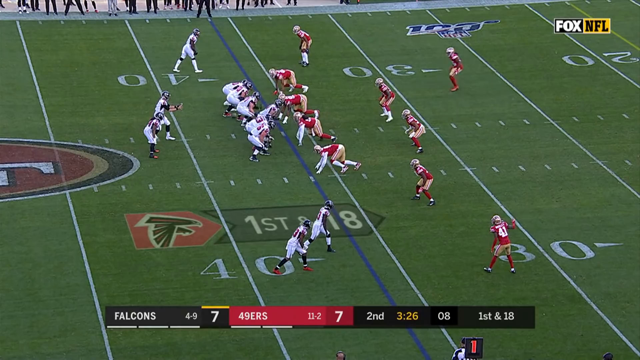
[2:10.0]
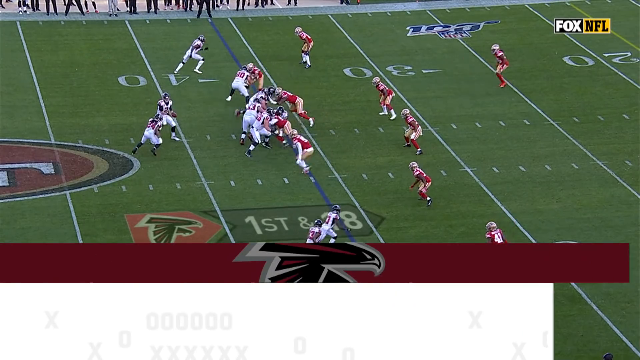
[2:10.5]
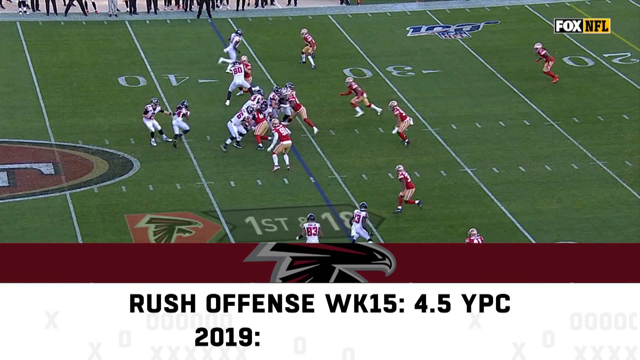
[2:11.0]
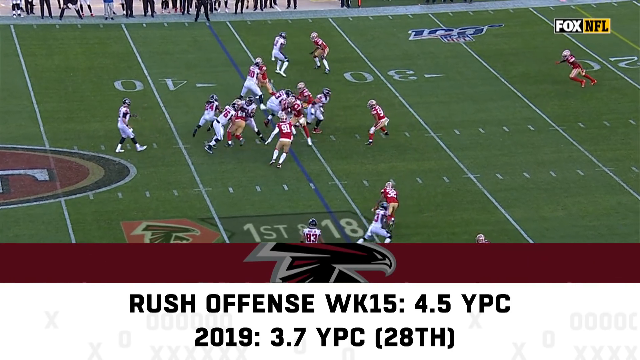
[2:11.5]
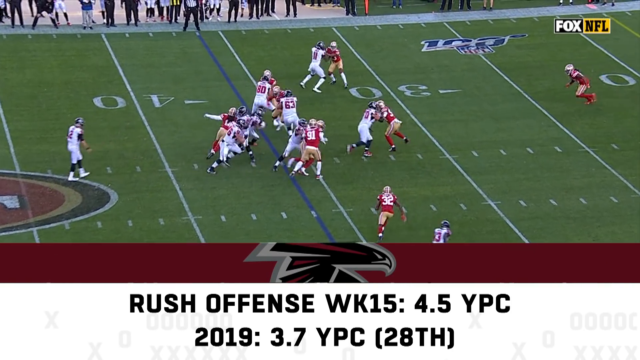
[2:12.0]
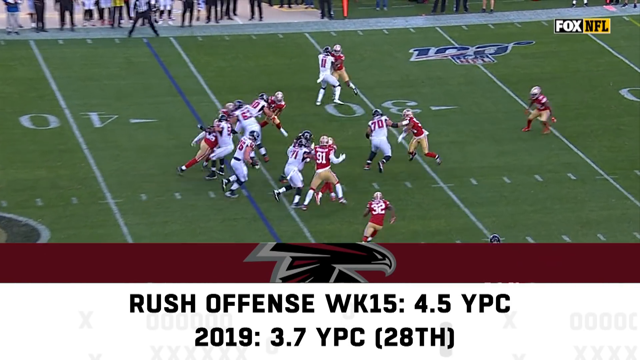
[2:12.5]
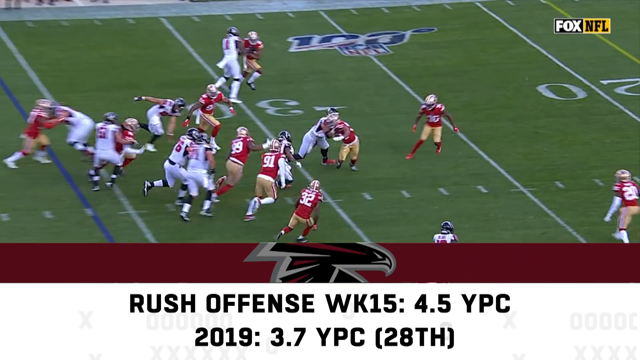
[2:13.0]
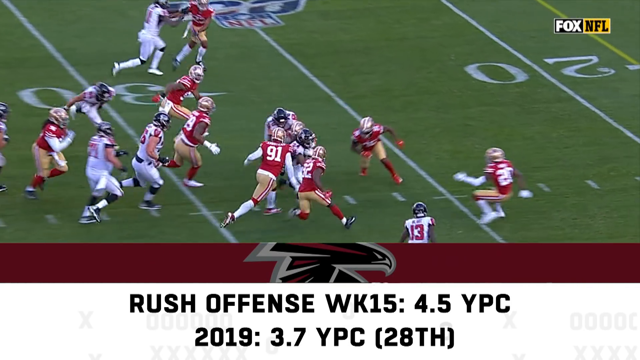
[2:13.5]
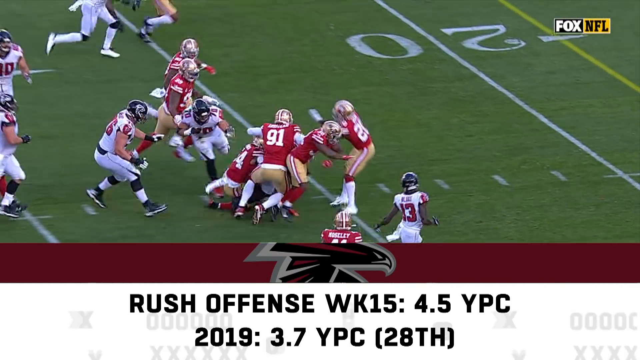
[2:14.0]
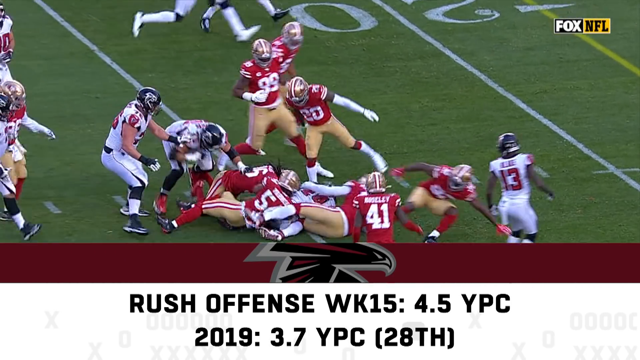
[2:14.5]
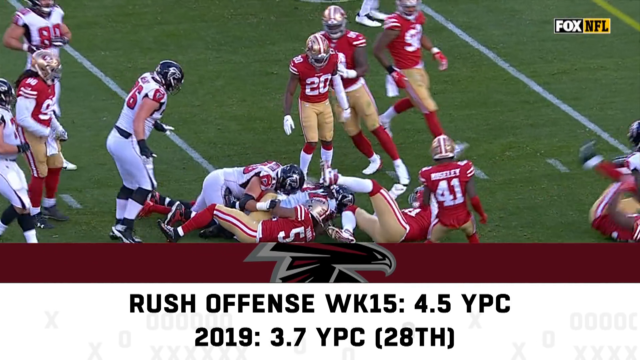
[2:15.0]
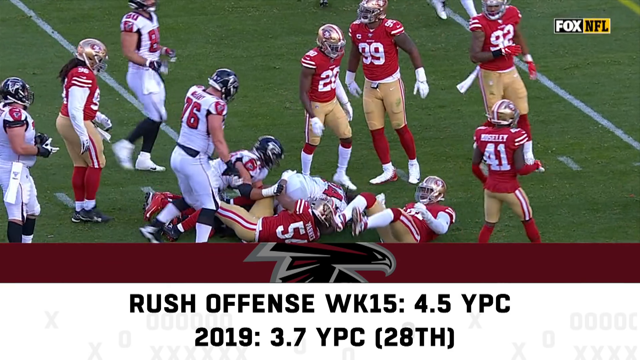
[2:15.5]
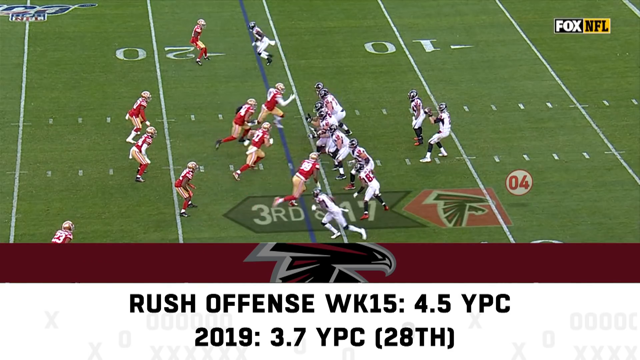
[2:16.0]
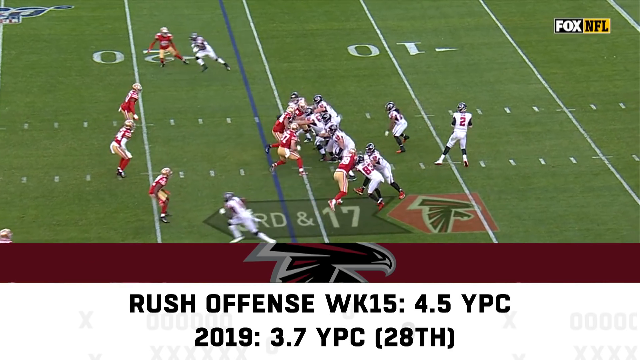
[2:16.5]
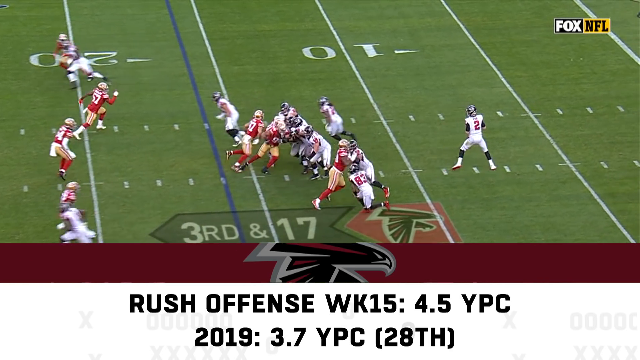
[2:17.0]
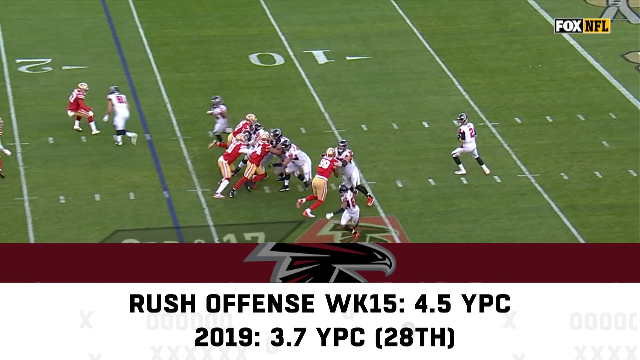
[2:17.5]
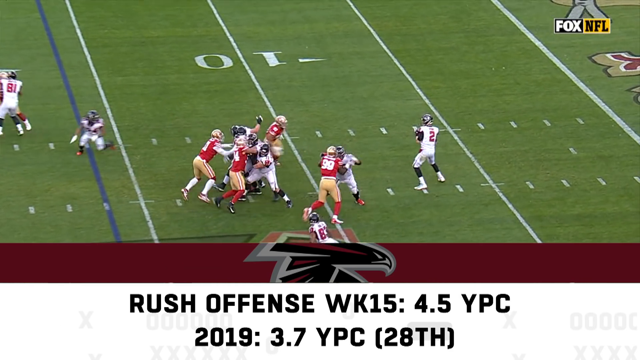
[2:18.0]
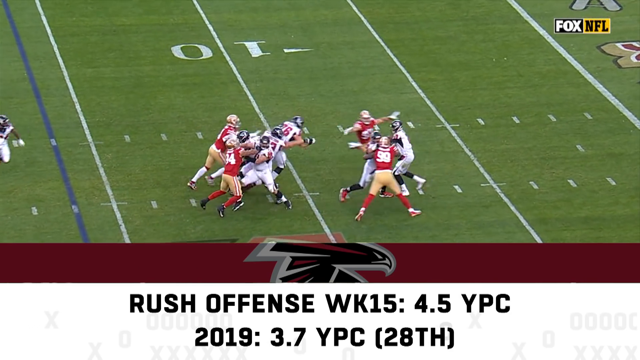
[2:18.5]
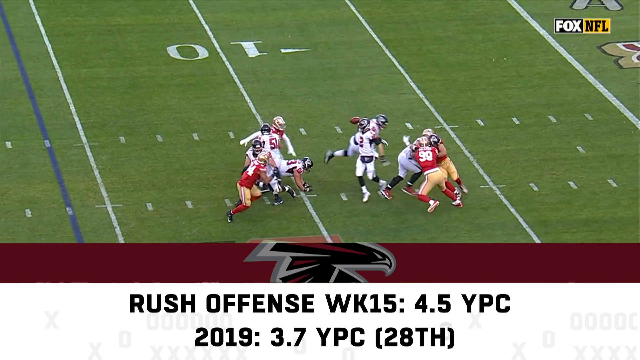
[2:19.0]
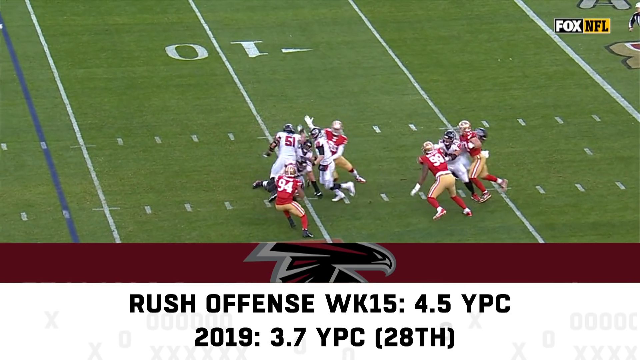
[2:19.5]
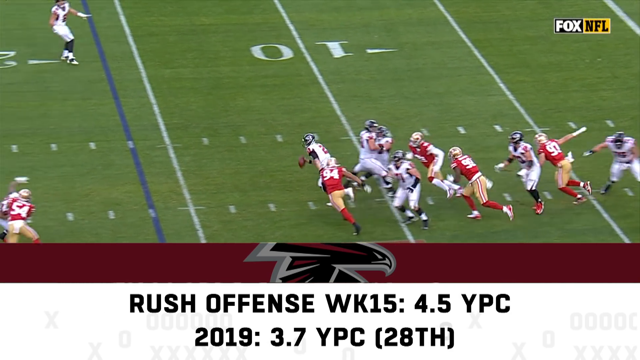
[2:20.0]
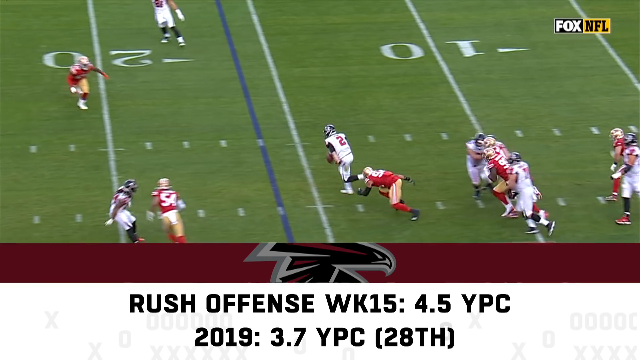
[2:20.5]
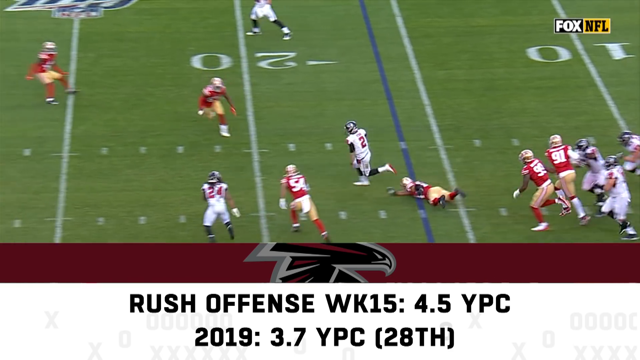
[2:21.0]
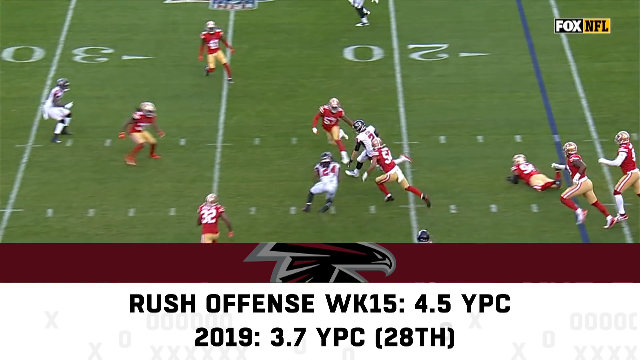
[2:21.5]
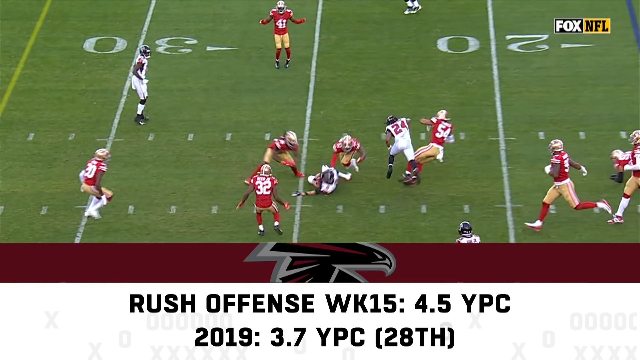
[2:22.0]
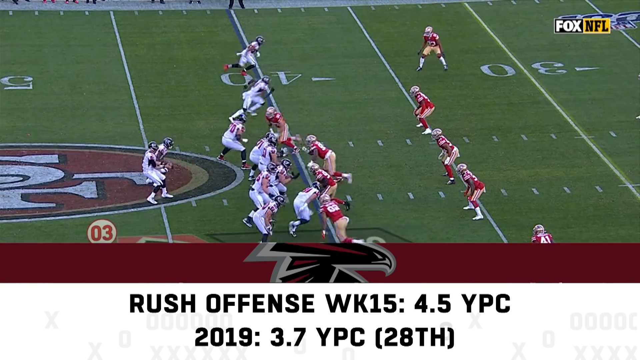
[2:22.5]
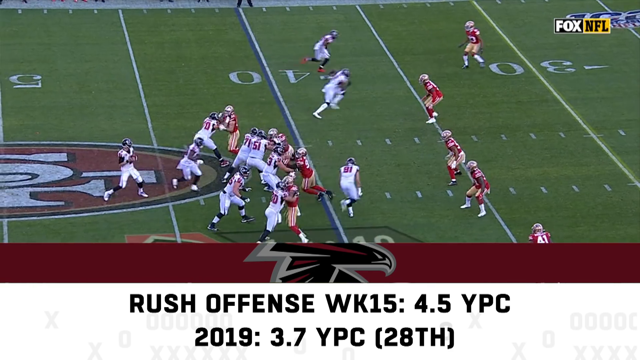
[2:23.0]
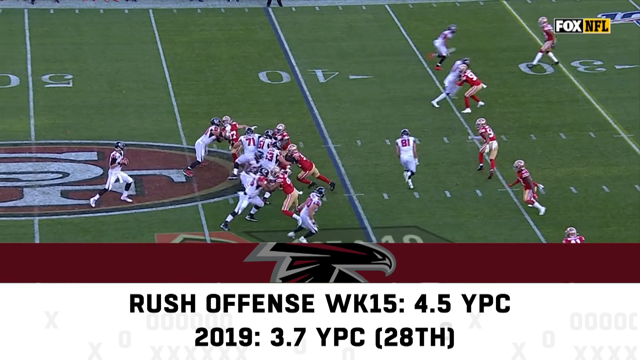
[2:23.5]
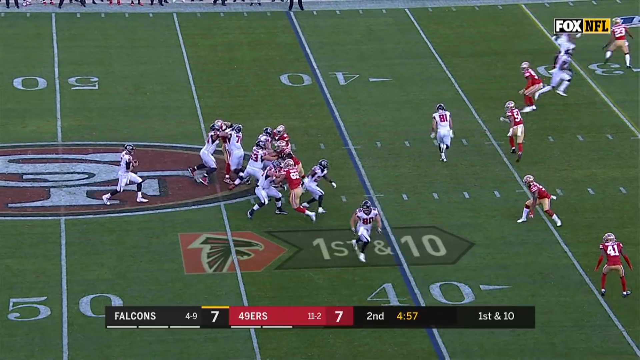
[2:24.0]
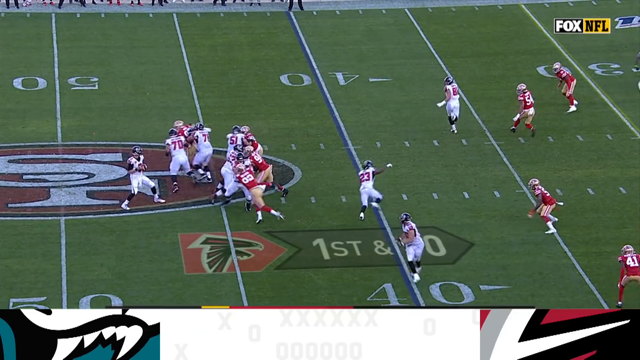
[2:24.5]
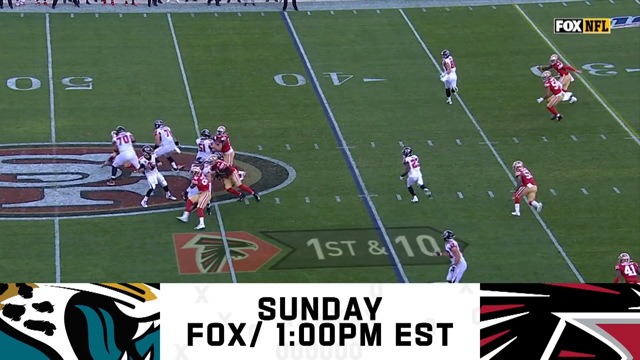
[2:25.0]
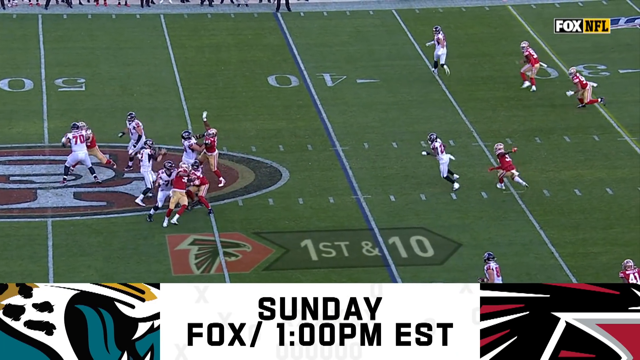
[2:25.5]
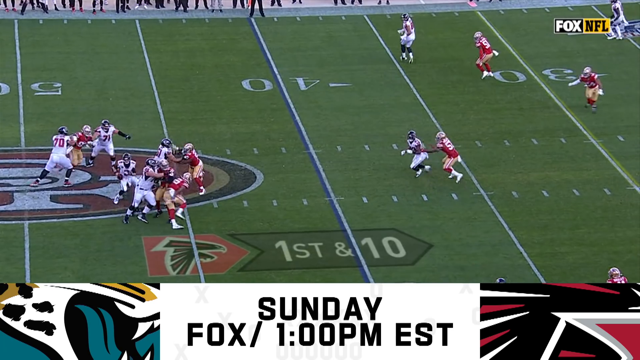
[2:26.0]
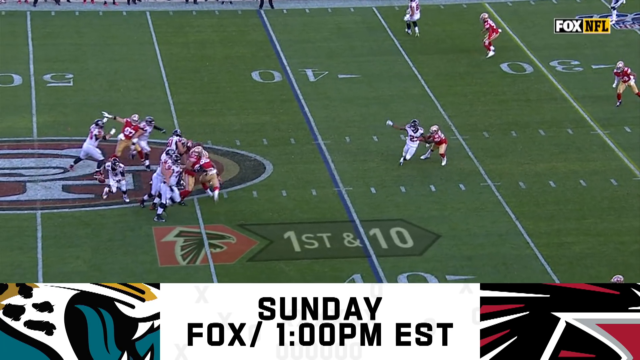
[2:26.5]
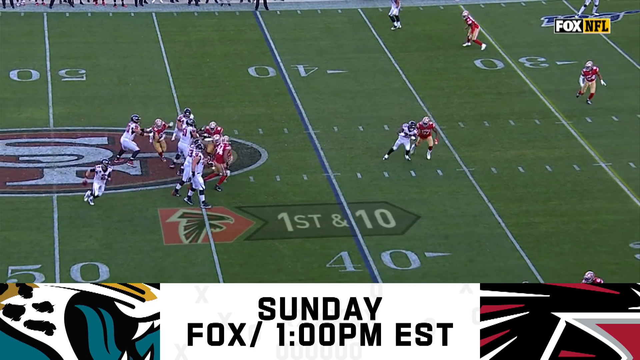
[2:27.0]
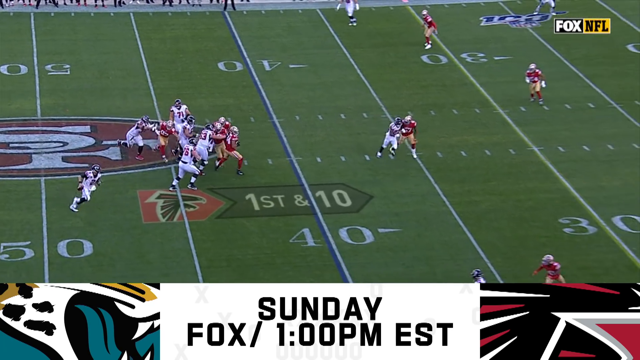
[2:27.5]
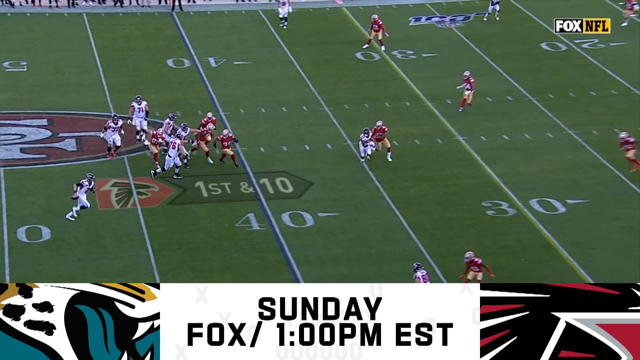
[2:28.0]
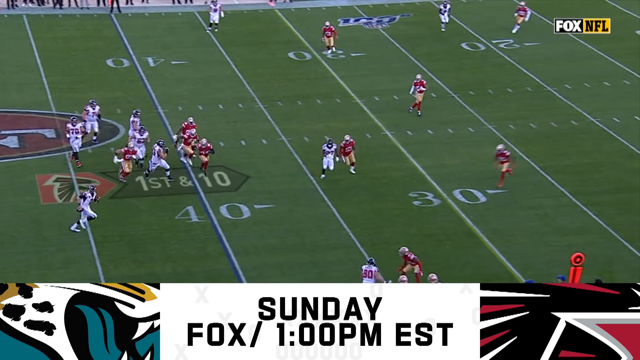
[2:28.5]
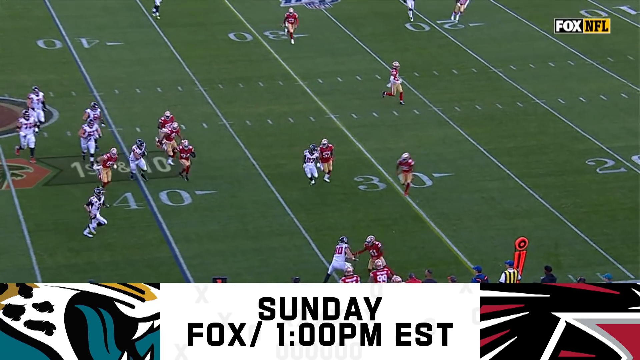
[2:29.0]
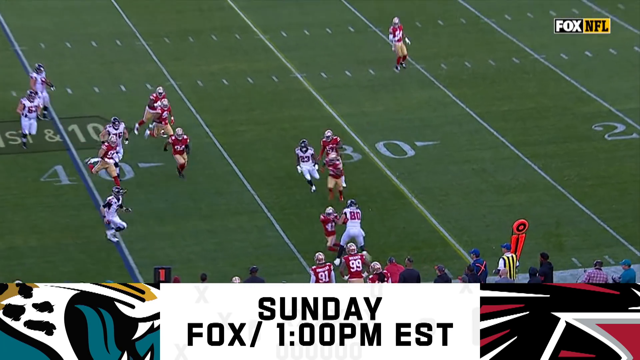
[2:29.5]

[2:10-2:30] Back at the Atlanta Falcons and San Francisco 49ers game, the score is 7-7. Atlanta have the ball and advance downfield. The Falcons quarterback, number 2, dodges out of a sack and runs the ball upfield as the defenders overcommit. Near the halfway line, he dummies a pass, then runs to the right with a couple of his own offensive linemen in front of him and space ahead, and eventually runs off the pitch after a gain of about five yards. Season records show the 49ers at 11-2 and the Falcons at 4-9.